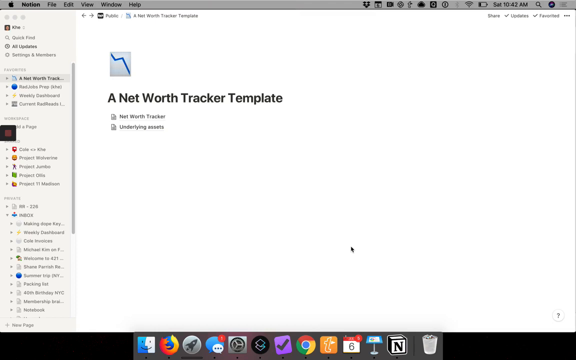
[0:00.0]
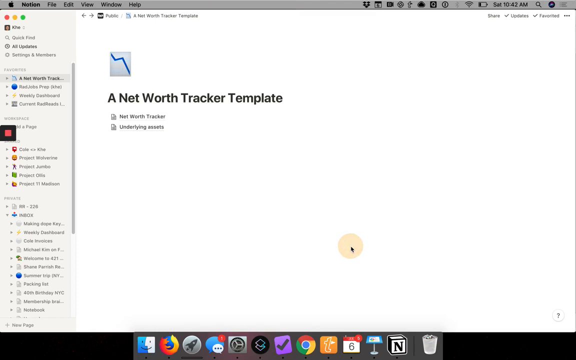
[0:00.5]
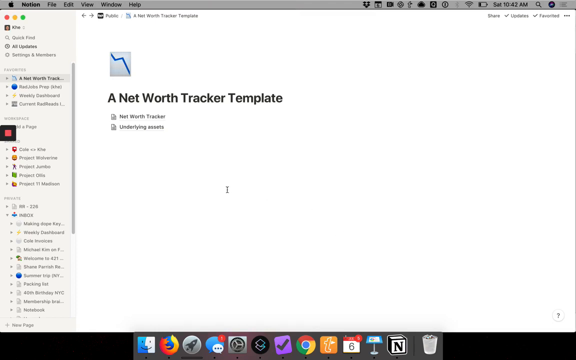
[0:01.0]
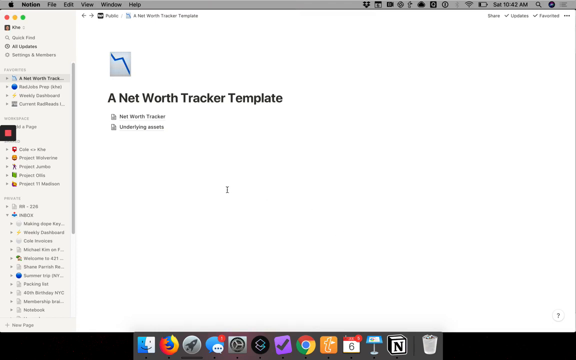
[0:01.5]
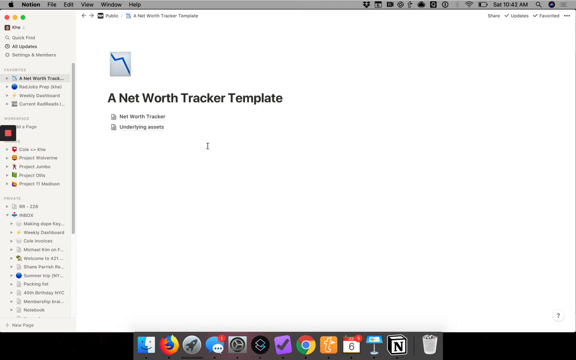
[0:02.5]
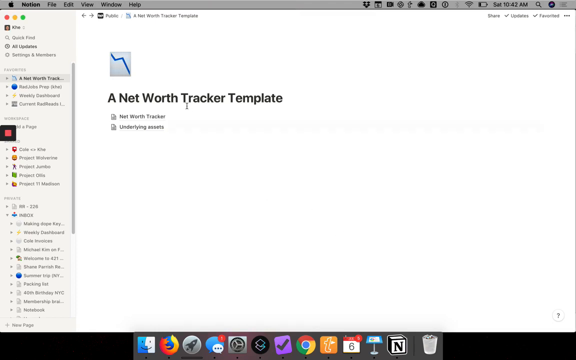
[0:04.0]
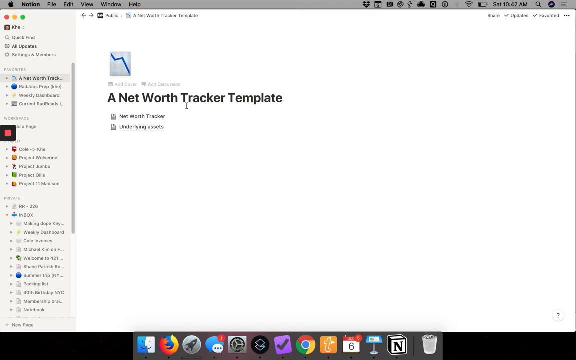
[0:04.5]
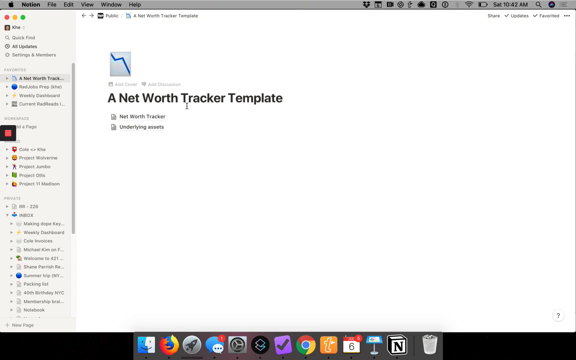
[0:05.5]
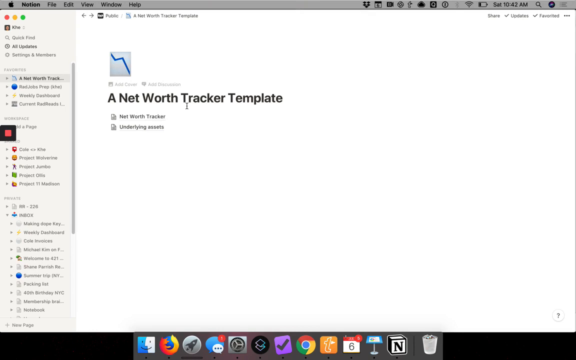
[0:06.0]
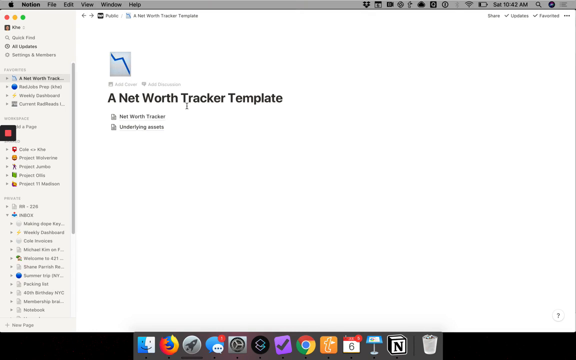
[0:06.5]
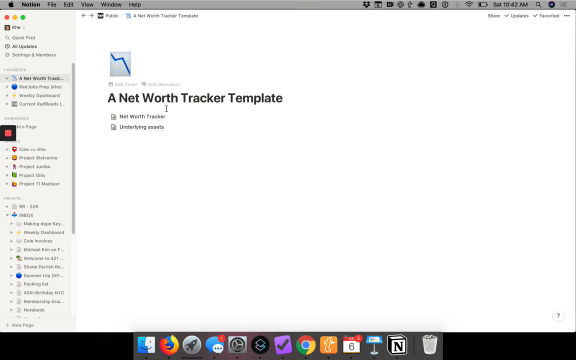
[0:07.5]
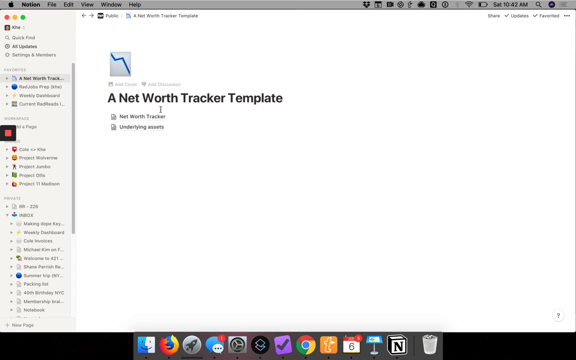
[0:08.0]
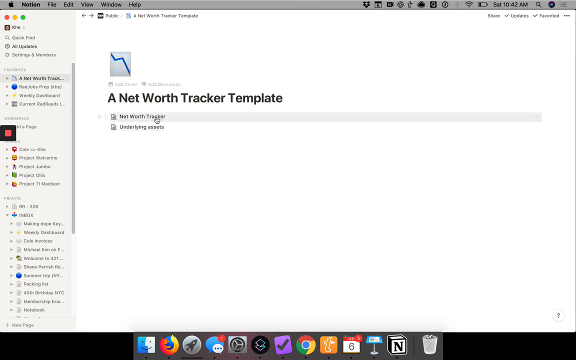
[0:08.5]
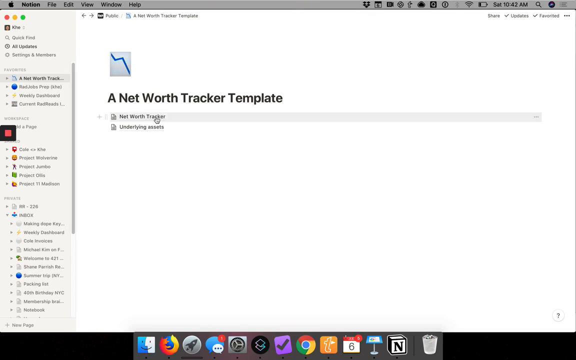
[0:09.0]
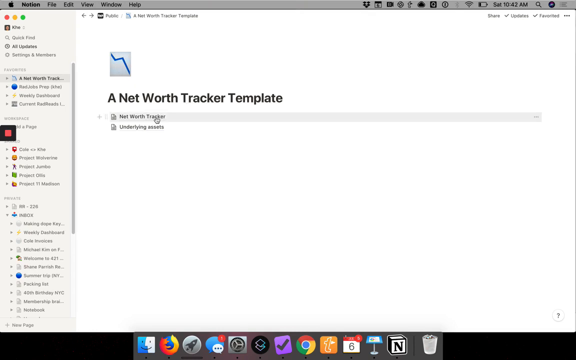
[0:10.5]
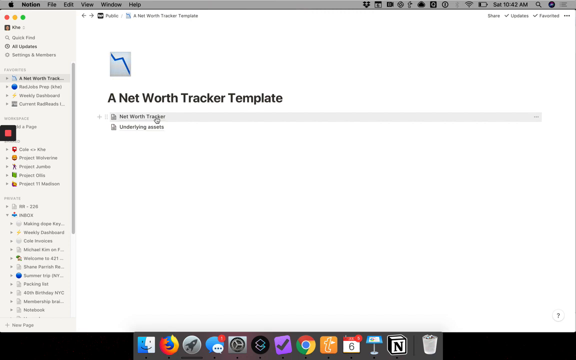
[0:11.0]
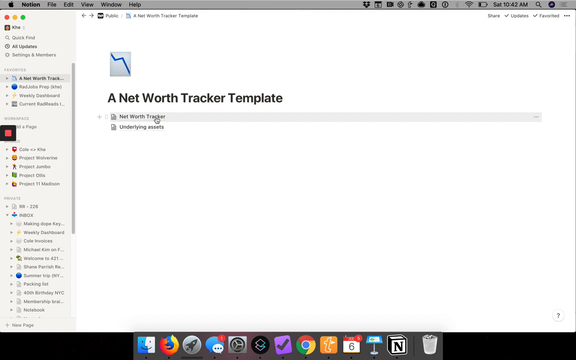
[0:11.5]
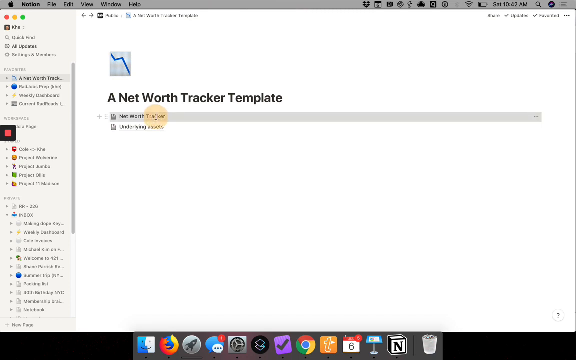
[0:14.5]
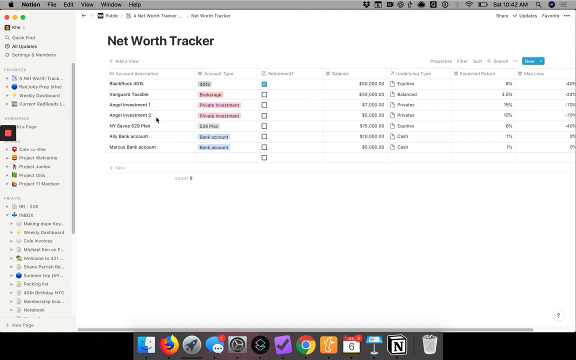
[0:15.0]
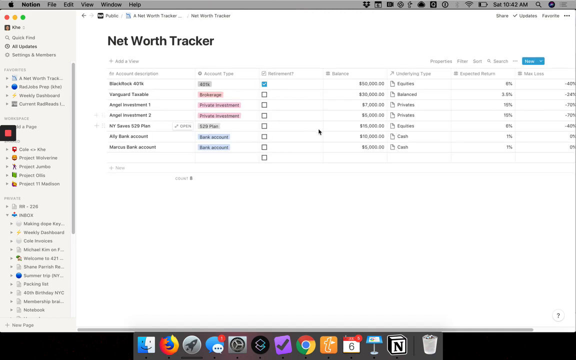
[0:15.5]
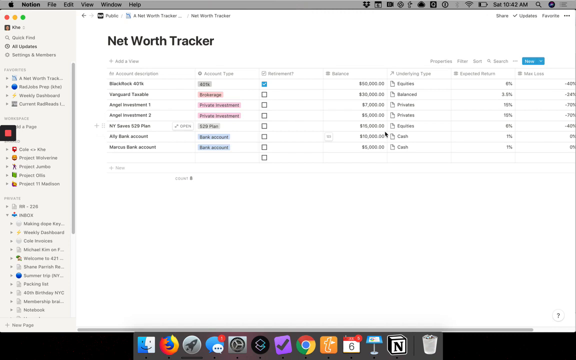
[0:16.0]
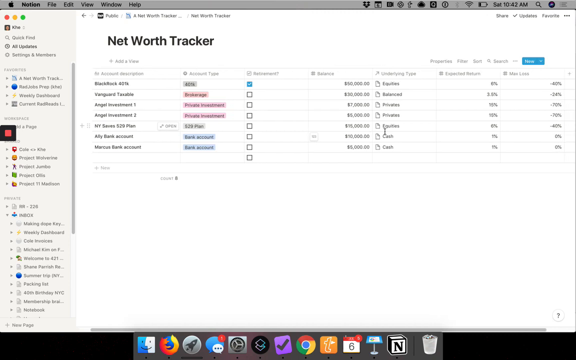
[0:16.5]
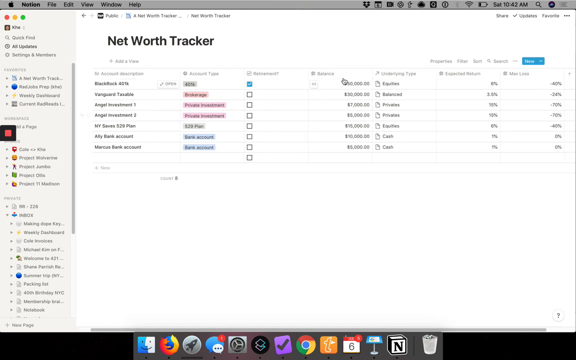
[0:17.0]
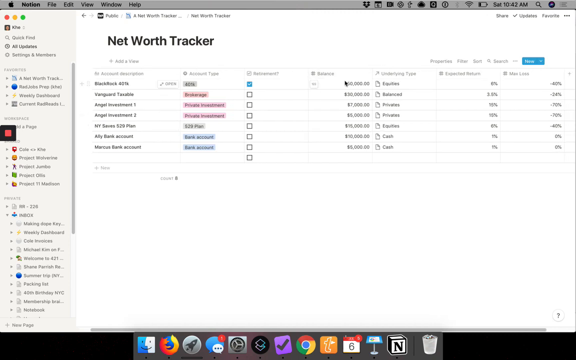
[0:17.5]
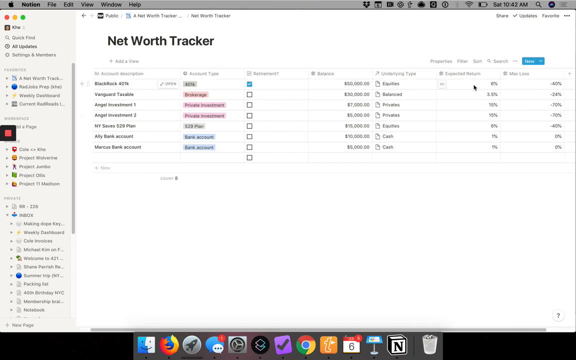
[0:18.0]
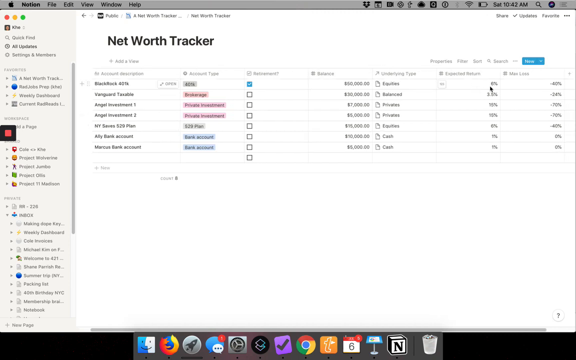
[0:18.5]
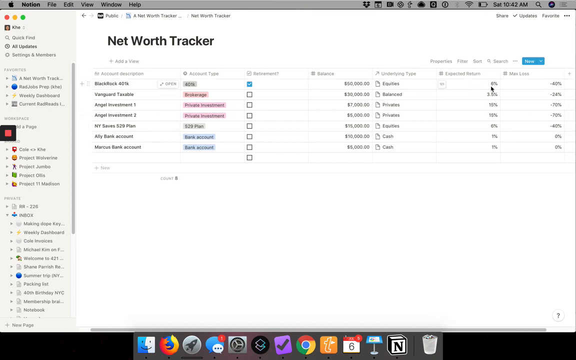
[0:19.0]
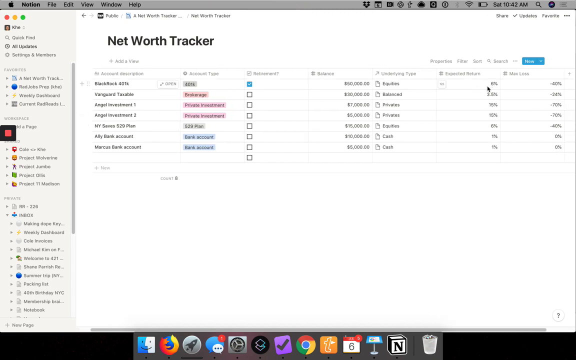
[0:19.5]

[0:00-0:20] The video shows a website that looks like it is probably at least over 10 years old. It reads "net worth tracker template," and above that is a white block box with a blue squiggly line. A mouse cursor clicks on the net worth tracker; a little hand appears, and when it clicks, a yellow circle lights up where the word "tracker" is. The website then switches to a different page that says "net worth tracker," now with a number of columns, probably at least six or seven lines, some highlighted pink and blue, and some checkmark boxes. The mouse becomes a black pointy arrow, moves somewhat to the right of the page, clicks near the top, and scrolls over in a double motion of clicking and scrolling before clicking off.